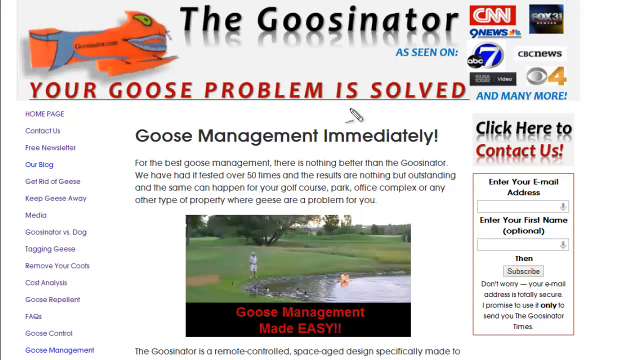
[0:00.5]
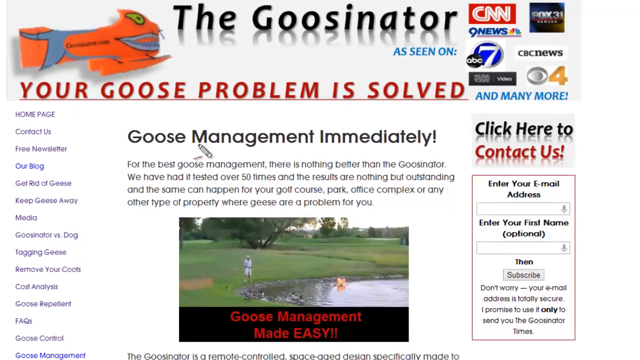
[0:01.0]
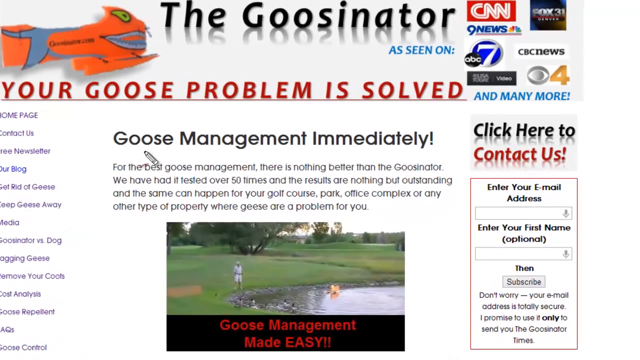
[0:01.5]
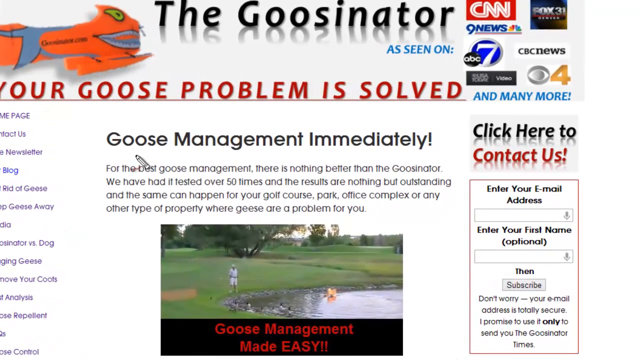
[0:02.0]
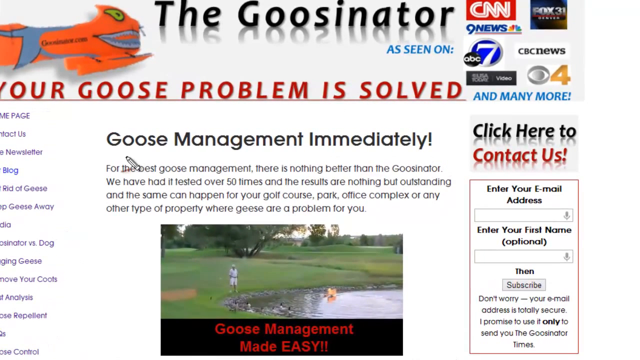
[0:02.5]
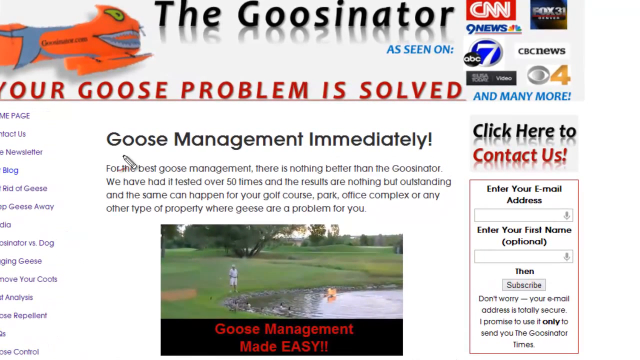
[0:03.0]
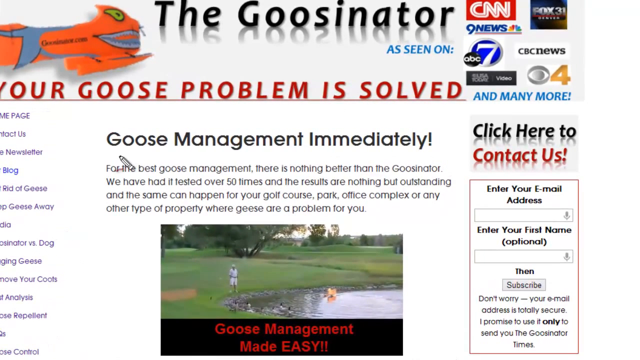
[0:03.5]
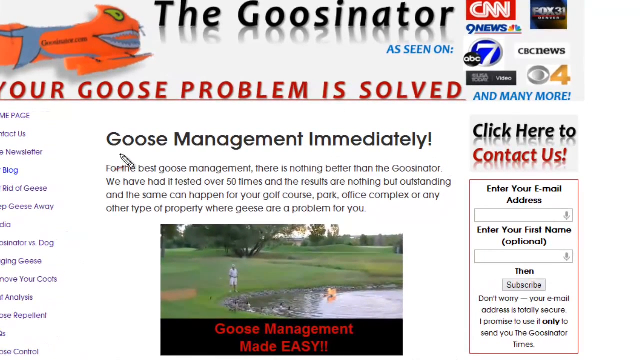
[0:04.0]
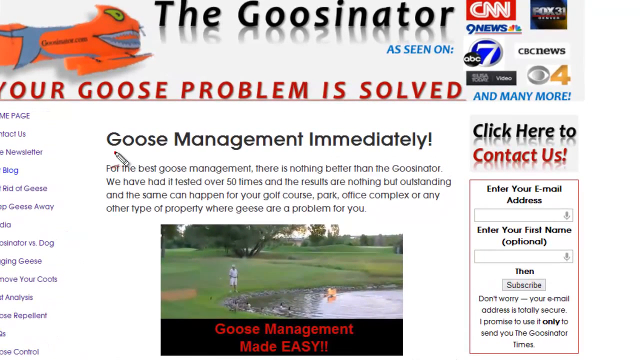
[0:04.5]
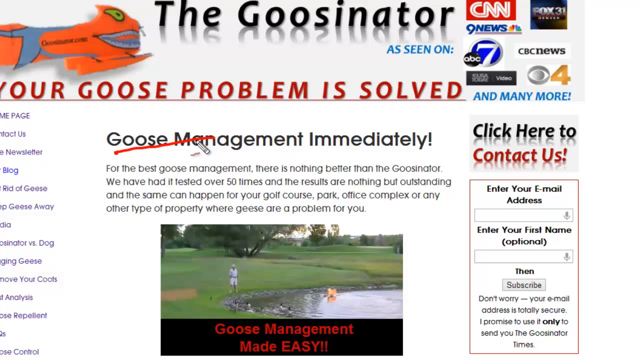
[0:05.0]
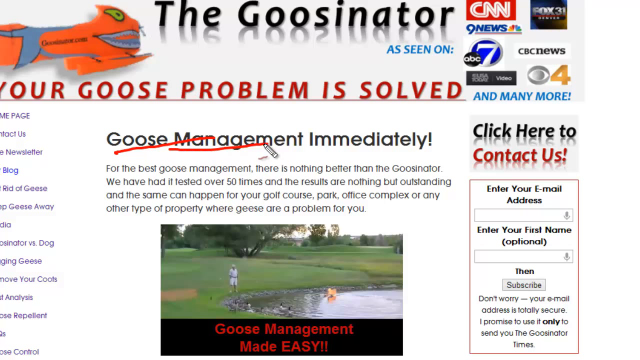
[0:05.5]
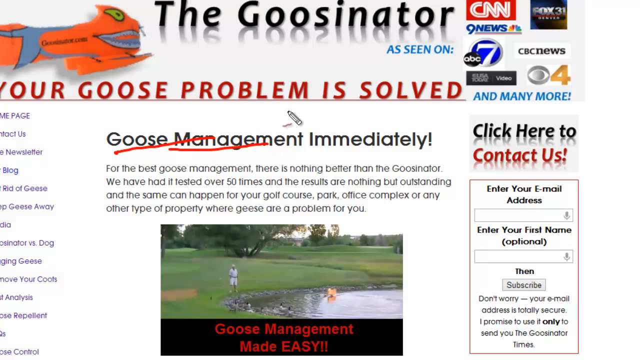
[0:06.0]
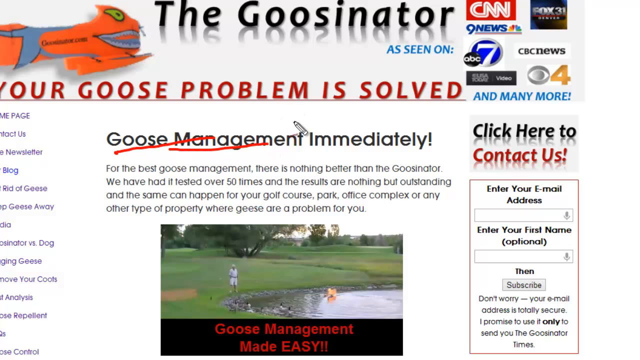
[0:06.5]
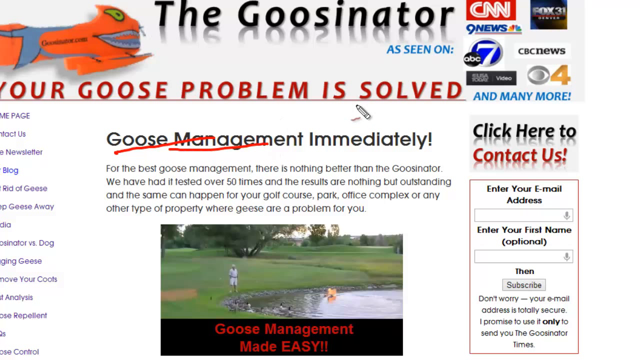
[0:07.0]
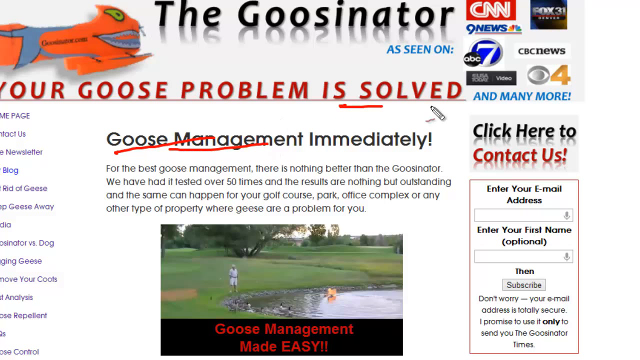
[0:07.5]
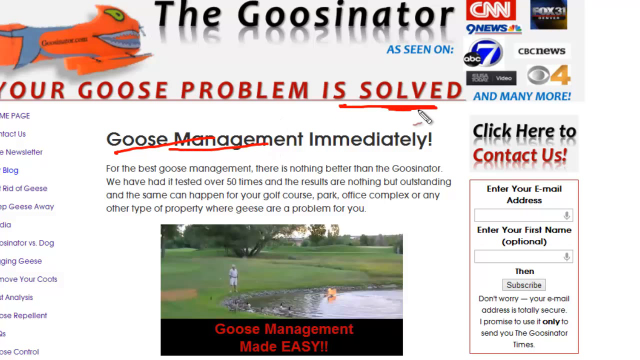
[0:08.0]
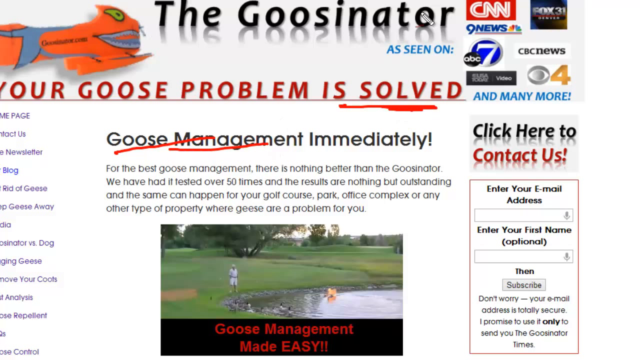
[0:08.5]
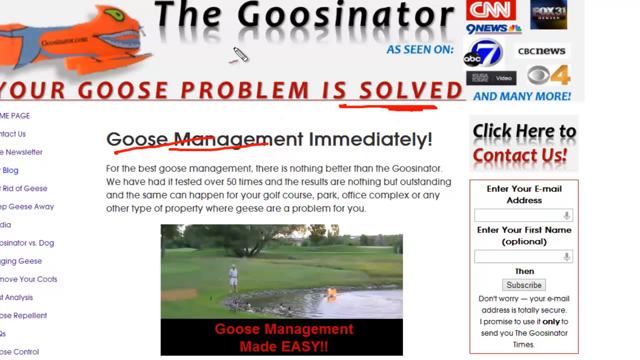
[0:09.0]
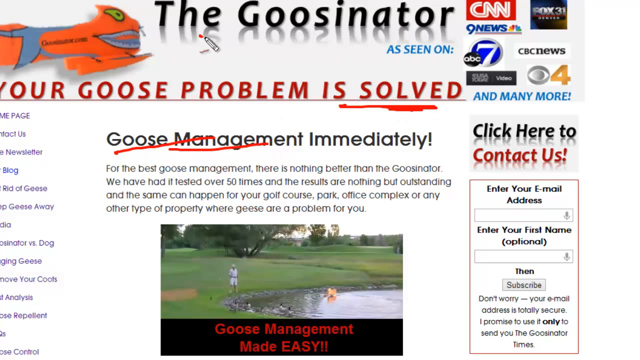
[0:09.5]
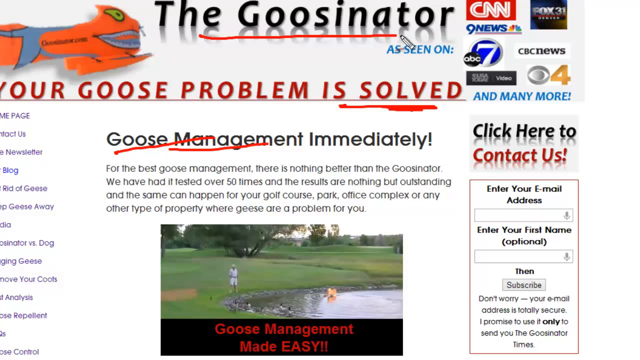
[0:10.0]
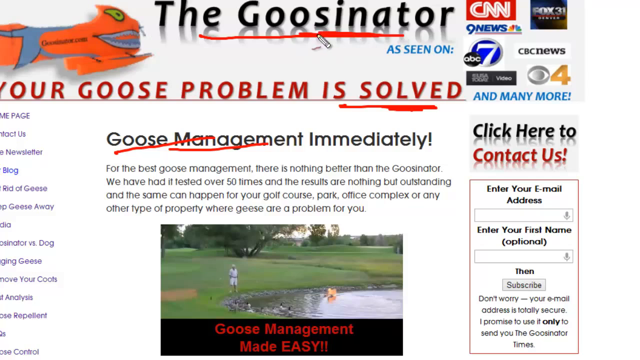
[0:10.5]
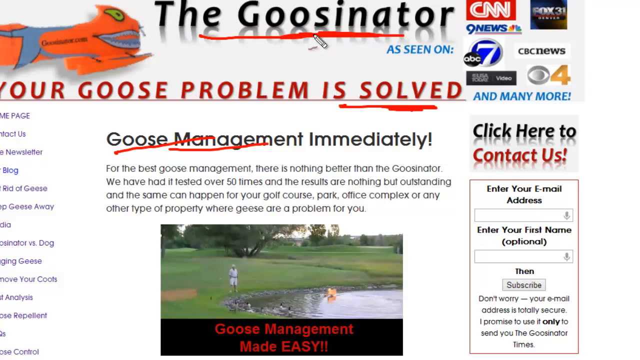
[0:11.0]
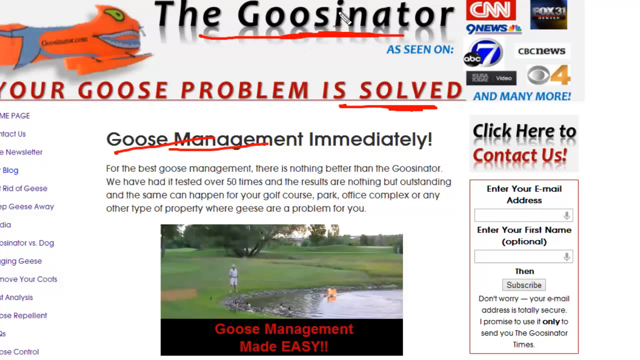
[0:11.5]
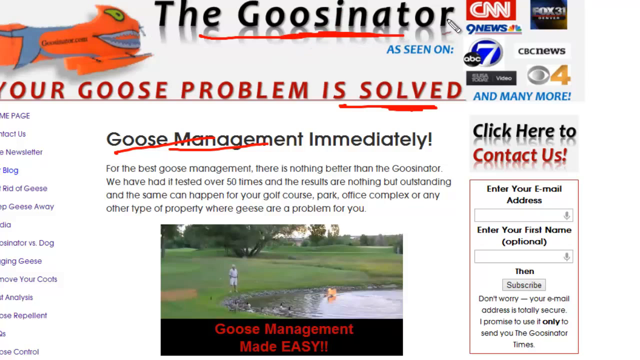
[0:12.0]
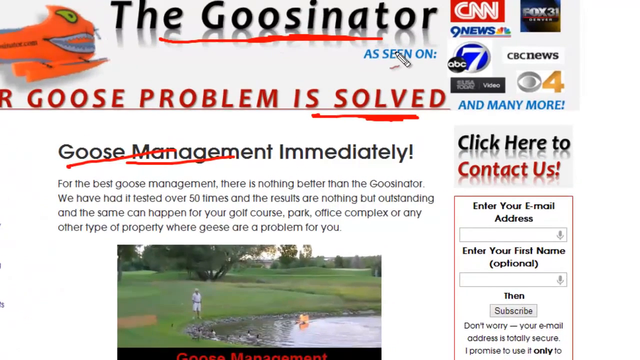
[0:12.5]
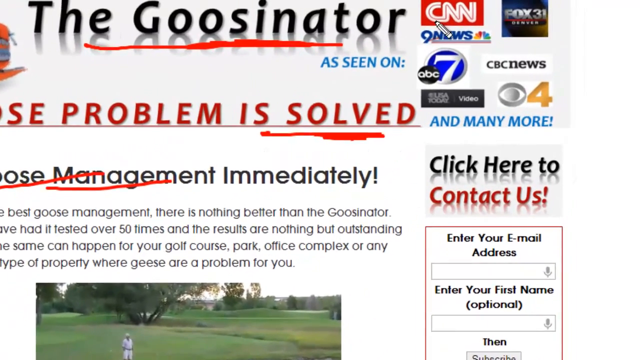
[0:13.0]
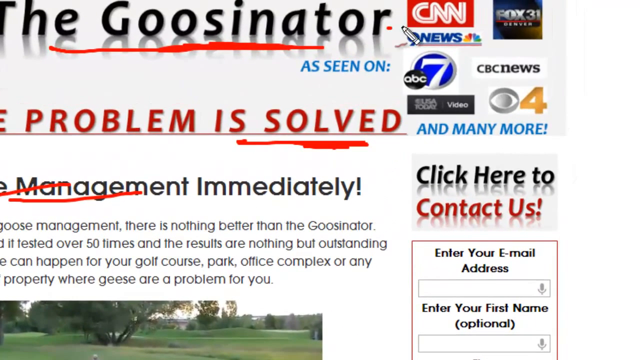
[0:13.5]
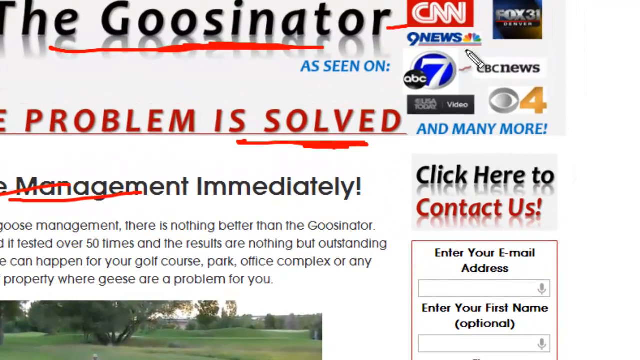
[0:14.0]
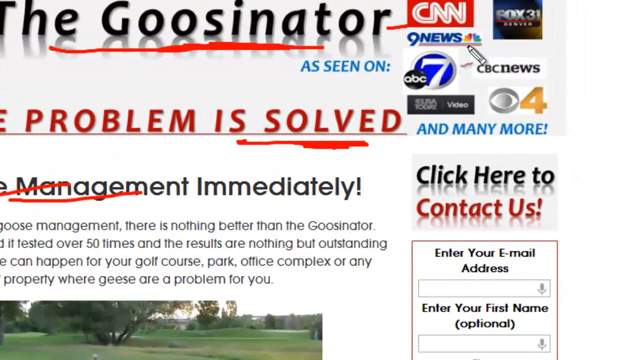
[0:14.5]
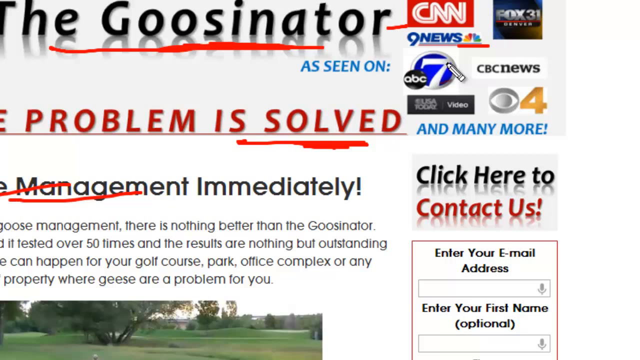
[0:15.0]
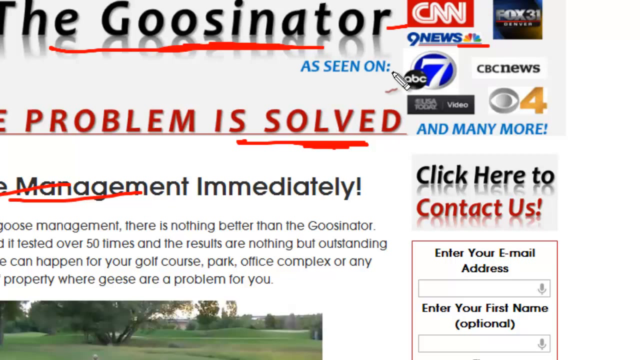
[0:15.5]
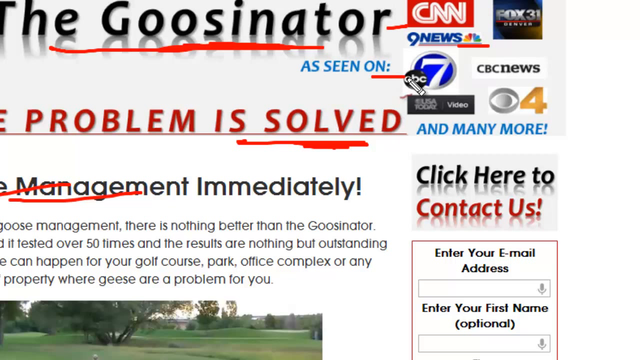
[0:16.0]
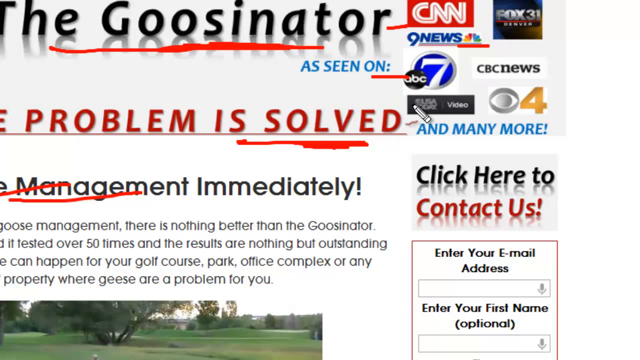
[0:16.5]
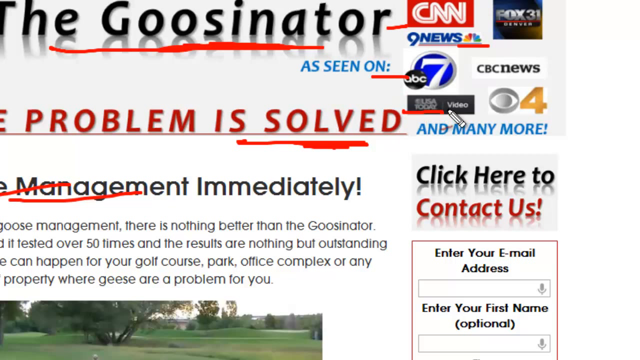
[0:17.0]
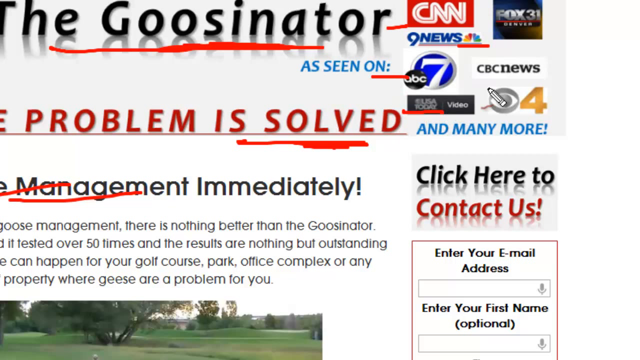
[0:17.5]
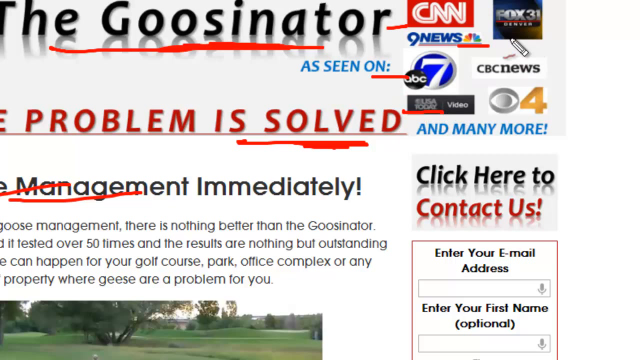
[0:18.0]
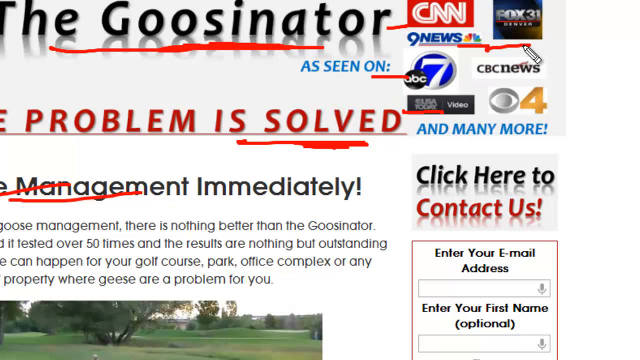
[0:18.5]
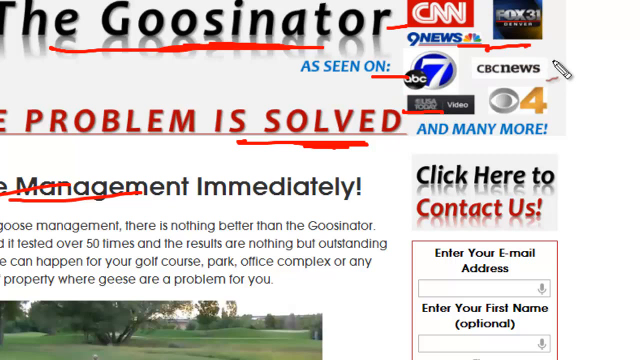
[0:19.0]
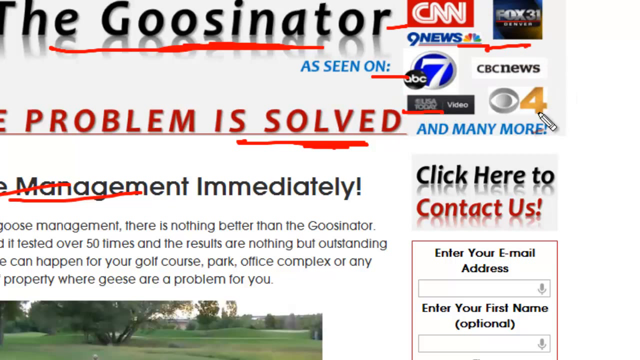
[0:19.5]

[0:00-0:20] The video opens on what looks like a web page with the header "The Goosinator." Below it is the text "Your Goose Problem Is Solved". There seems to be an article on the page titled "Goose Management Immediately!" A cursor with a pen icon underlines some text on the screen, including a CNN 9 News logo. In the top right corner of the screen is a cluster of TV channels, including CNN, Fox, CBC, CNBC and ABC, and the text under this section suggests there are more channels. There is also an icon of what is possibly a goose, in orange with a bit of grey and a black and yellow eye. At the bottom centre of the screen is what is probably an image or embedded video, with the text "Goose Management Made Easy" written under a picture of somebody standing on green grass with possibly three geese coming out of a pond.